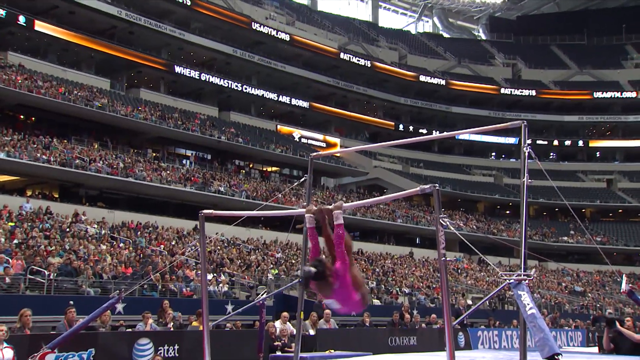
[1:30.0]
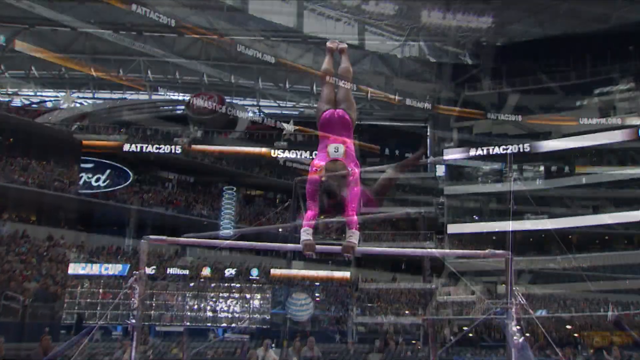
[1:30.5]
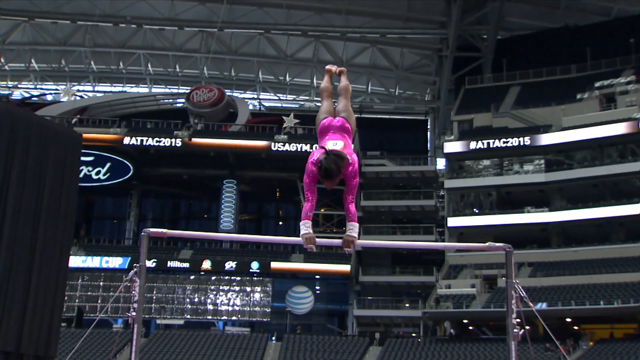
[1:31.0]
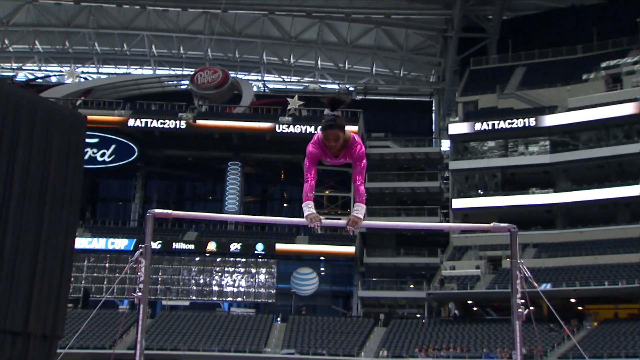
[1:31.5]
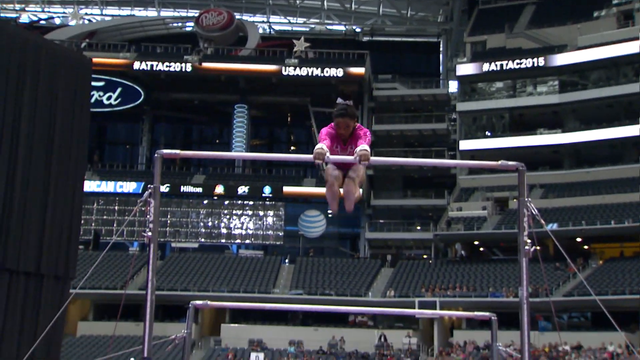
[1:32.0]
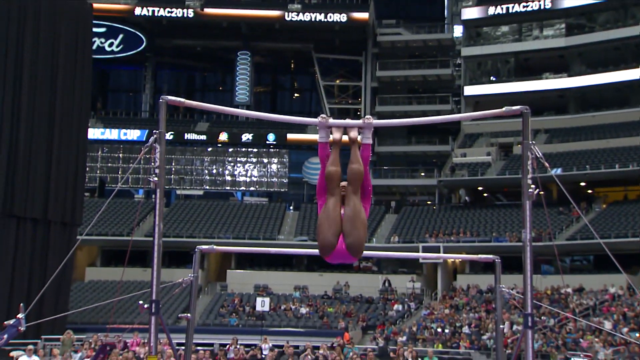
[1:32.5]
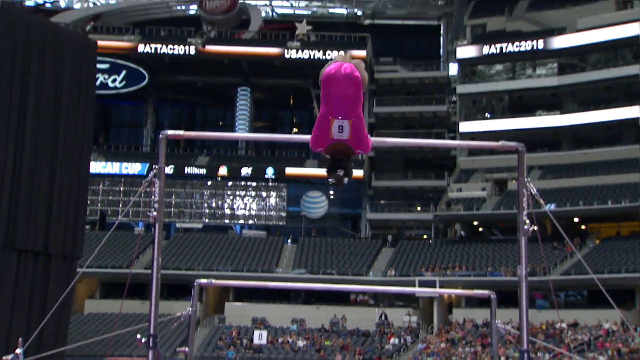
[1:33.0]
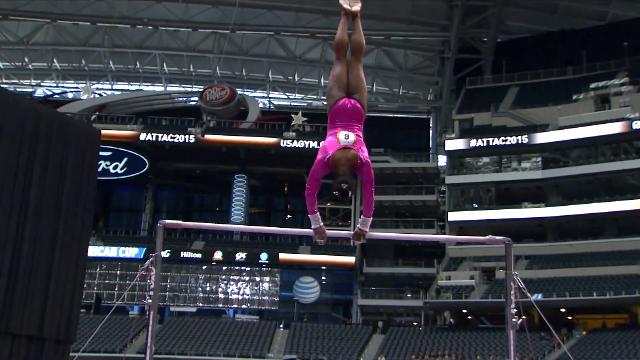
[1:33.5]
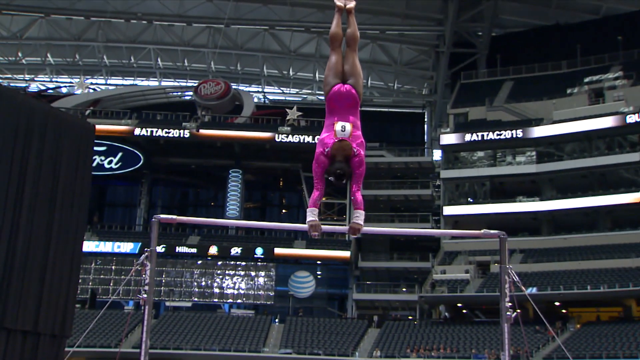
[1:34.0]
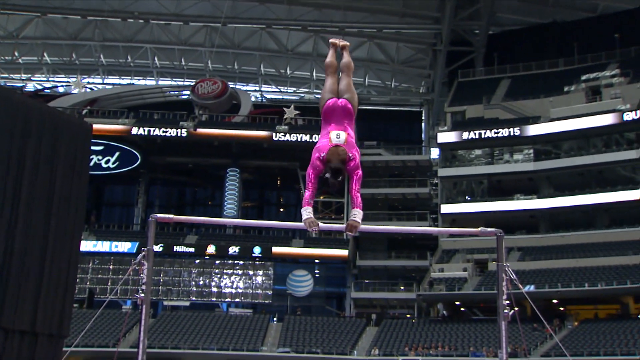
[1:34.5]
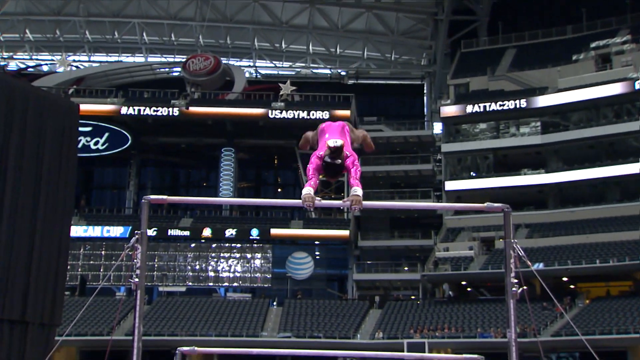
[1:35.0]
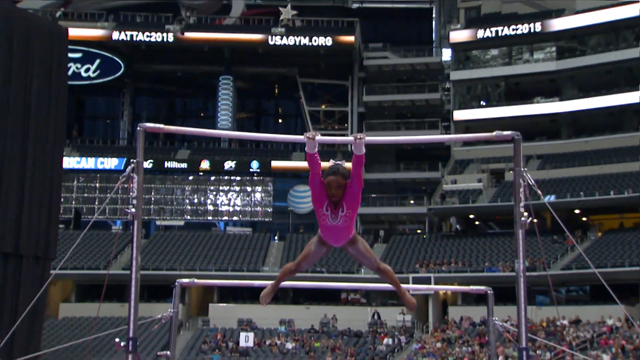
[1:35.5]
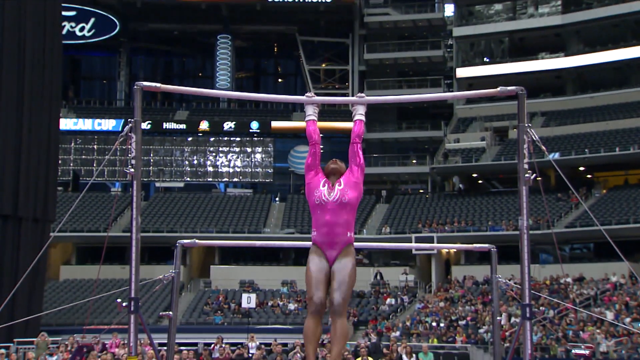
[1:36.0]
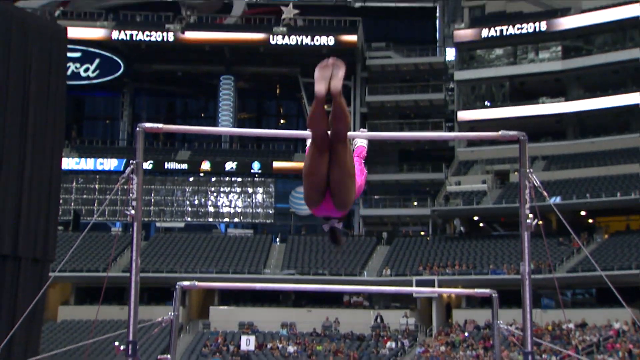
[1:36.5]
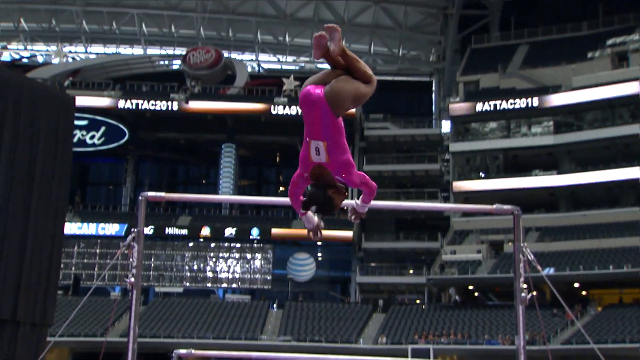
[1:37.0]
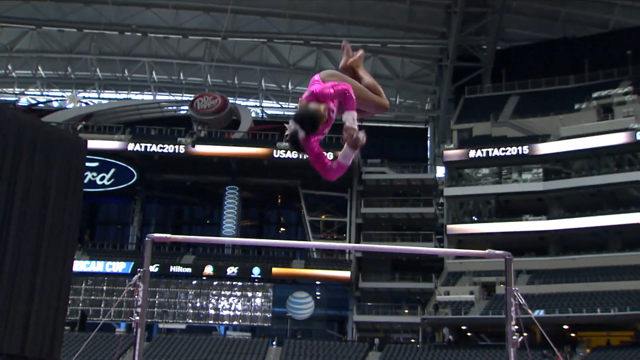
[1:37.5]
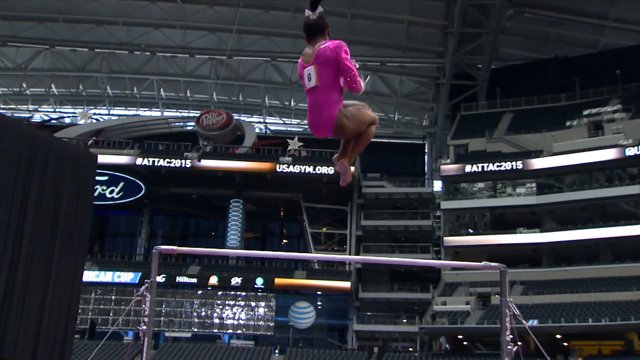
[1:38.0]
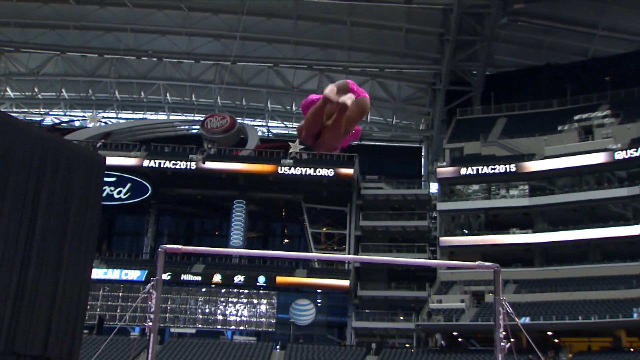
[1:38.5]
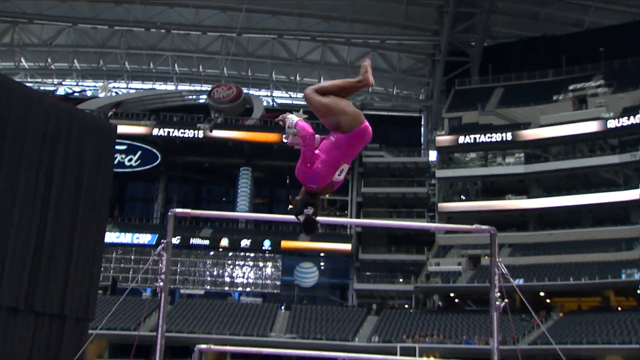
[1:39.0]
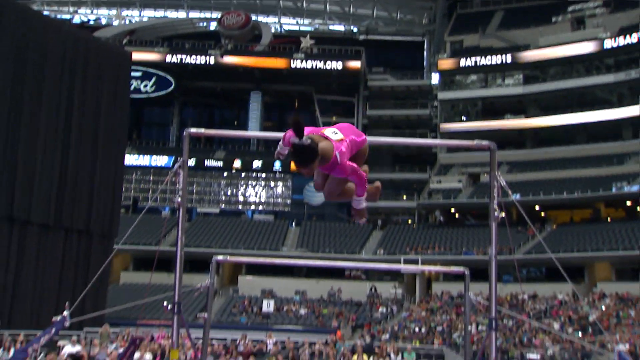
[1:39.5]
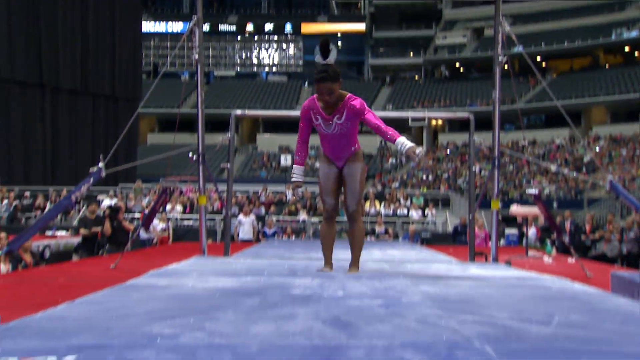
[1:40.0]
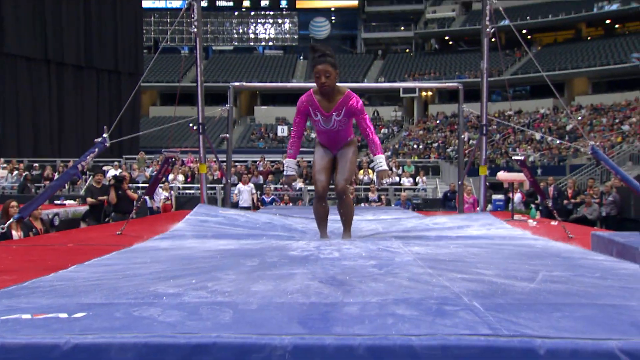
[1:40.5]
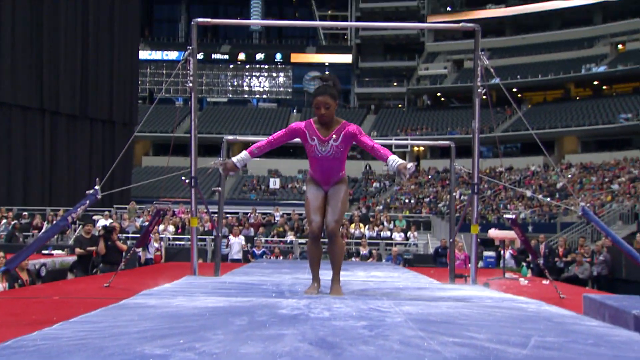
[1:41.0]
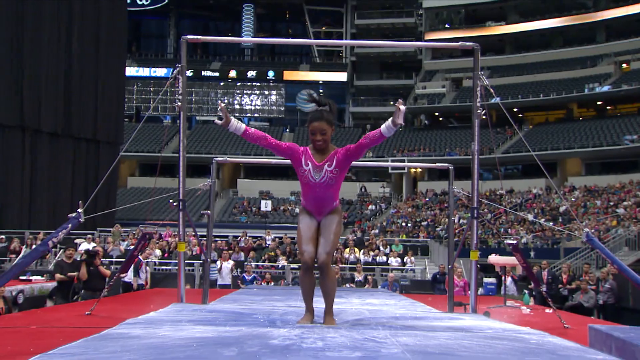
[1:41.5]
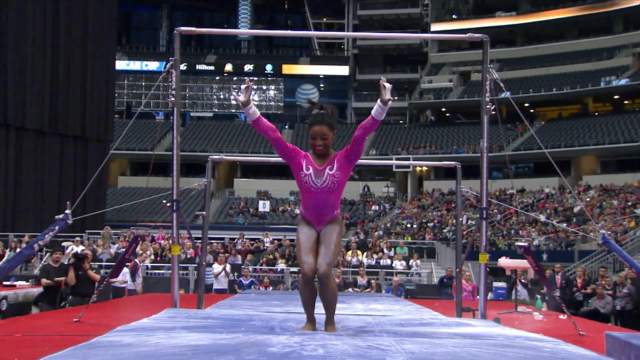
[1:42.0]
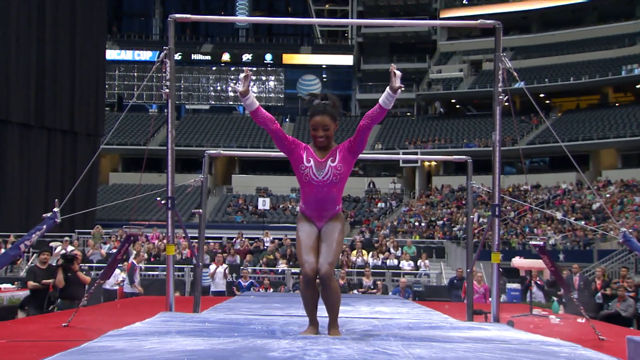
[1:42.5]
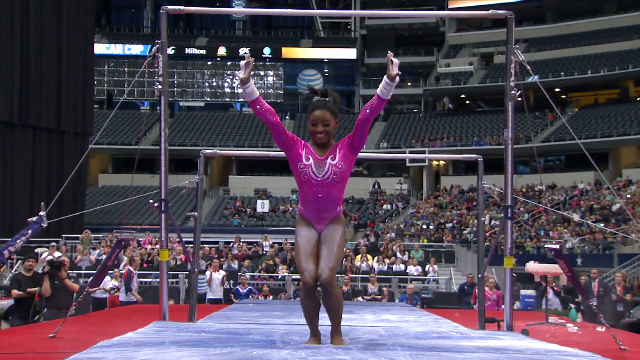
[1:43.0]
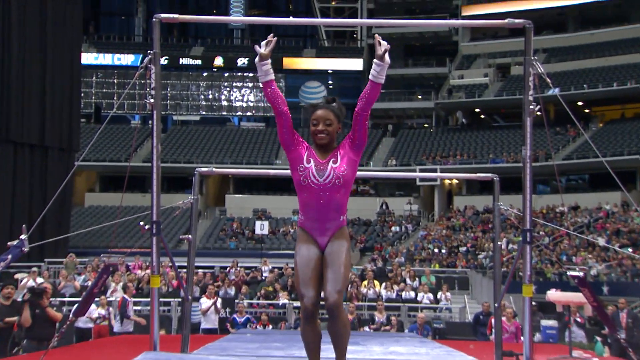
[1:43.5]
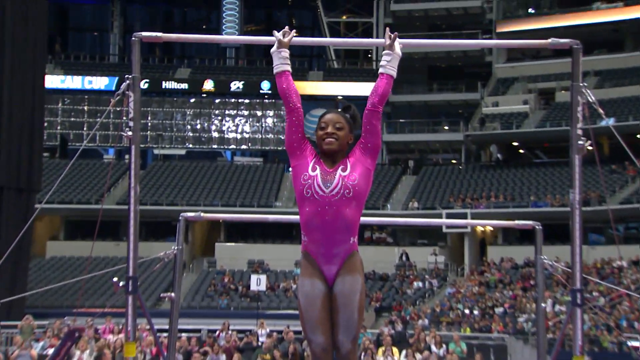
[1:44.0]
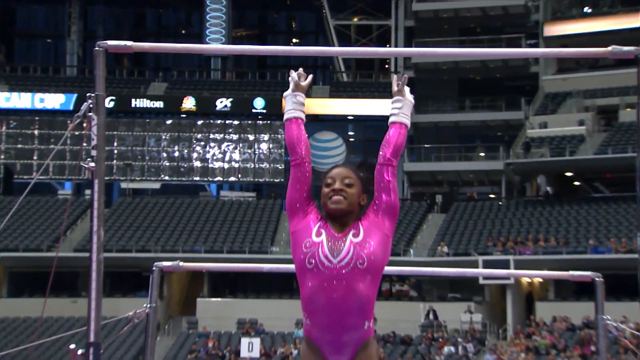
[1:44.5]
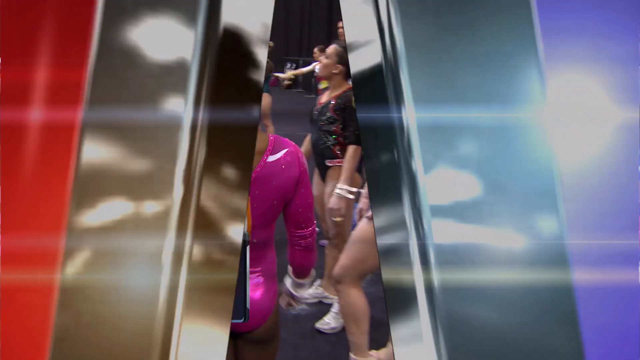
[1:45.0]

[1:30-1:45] A replay shows the moment she spins under the bar and jumps into the air to do a double or triple flip, suspended in midair before landing on the mat, this time from a different angle, a more first-person kind of perspective. The MSNBC logo flashes once again, and then a brief shot shows her walking past either teammates or adversaries; one woman wears the same black sparkly uniform seen earlier.